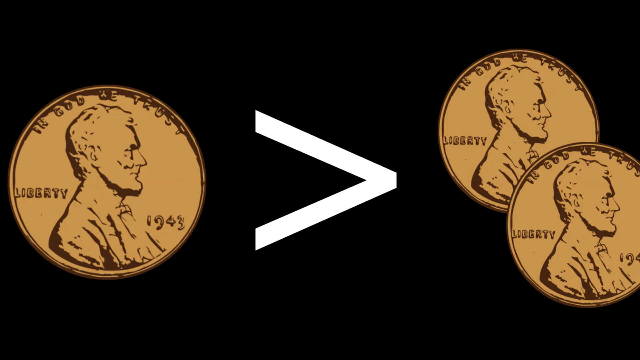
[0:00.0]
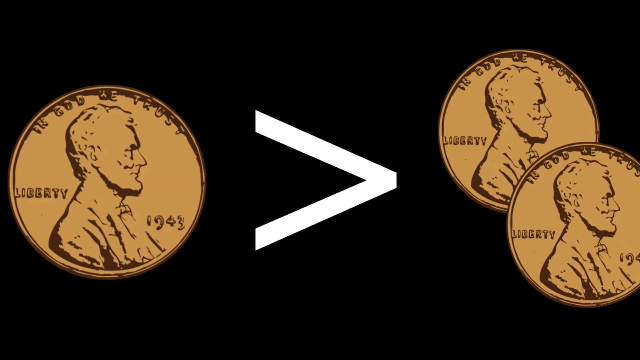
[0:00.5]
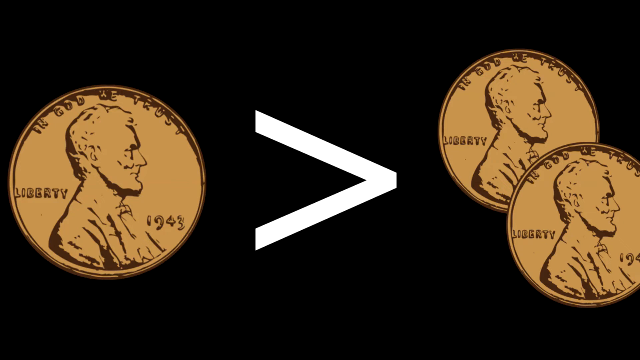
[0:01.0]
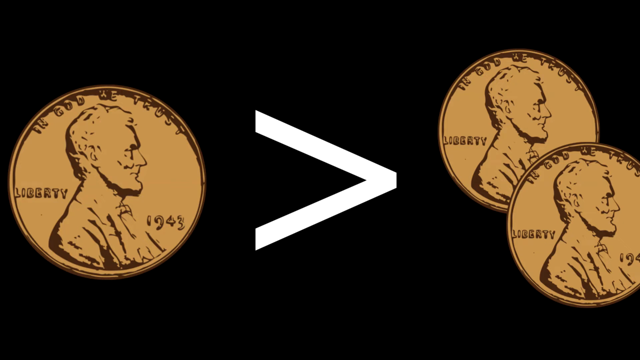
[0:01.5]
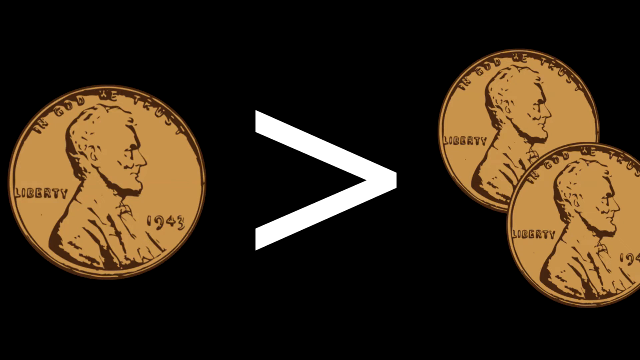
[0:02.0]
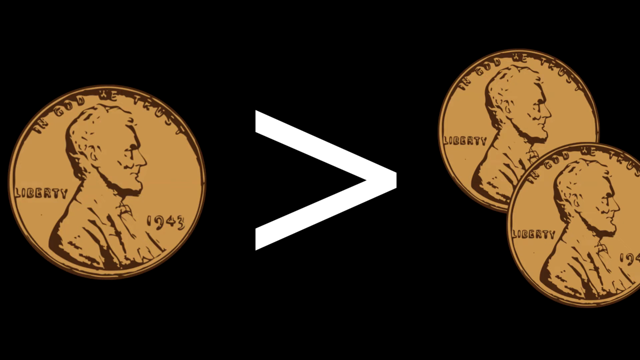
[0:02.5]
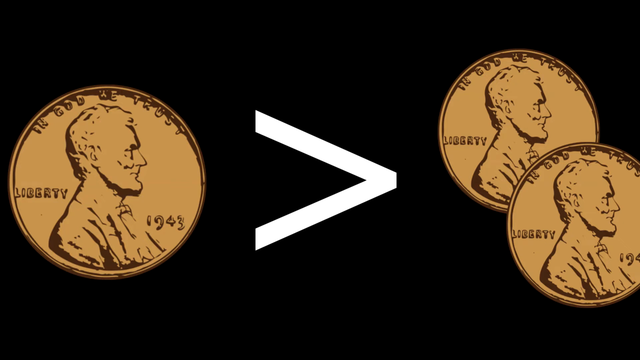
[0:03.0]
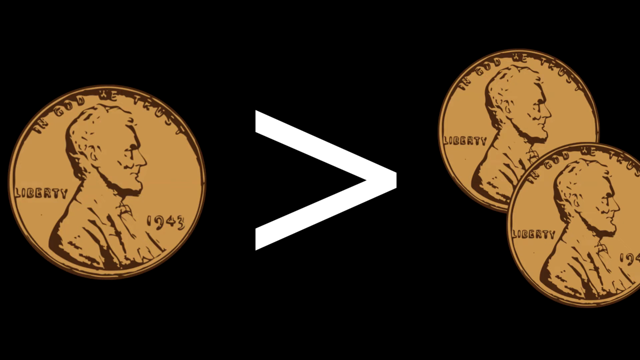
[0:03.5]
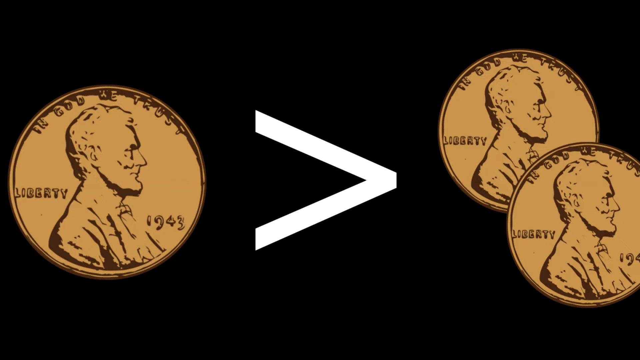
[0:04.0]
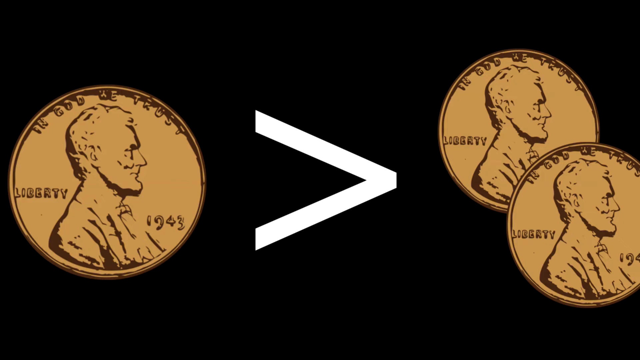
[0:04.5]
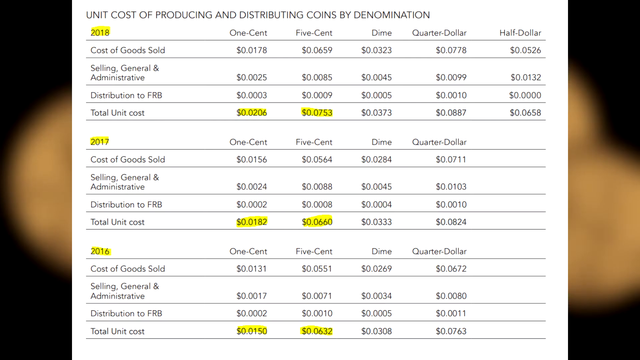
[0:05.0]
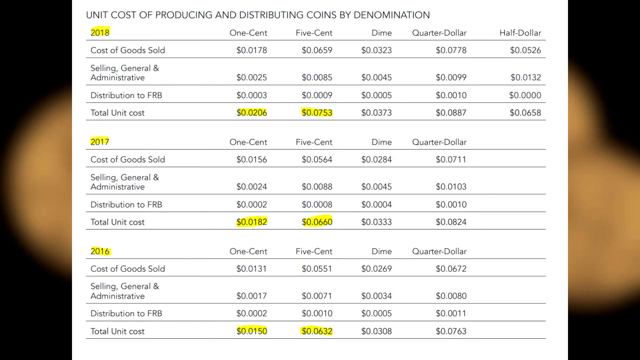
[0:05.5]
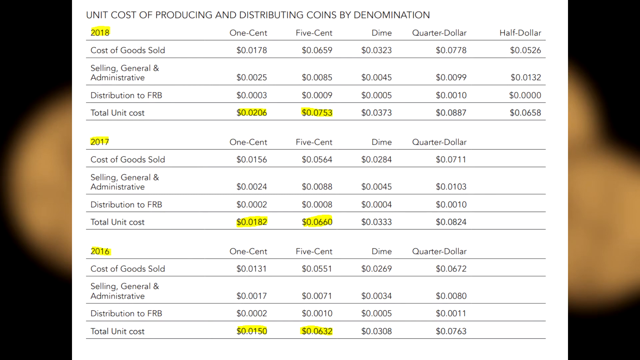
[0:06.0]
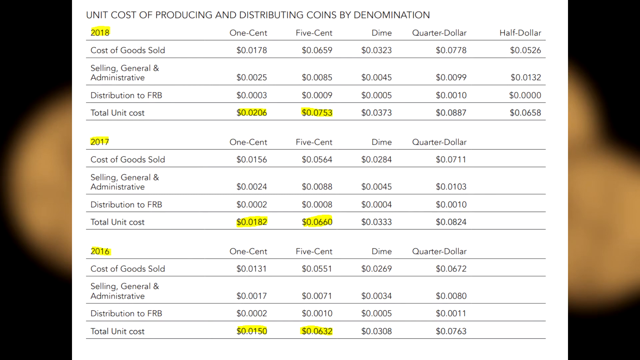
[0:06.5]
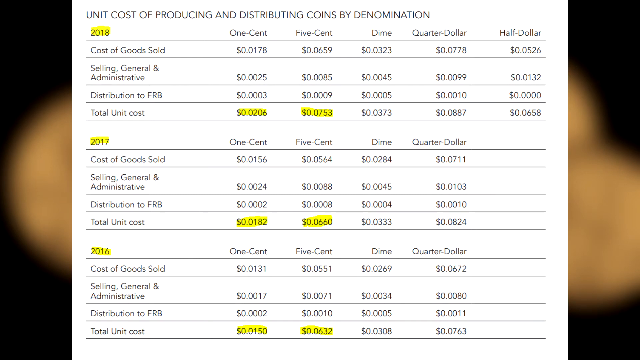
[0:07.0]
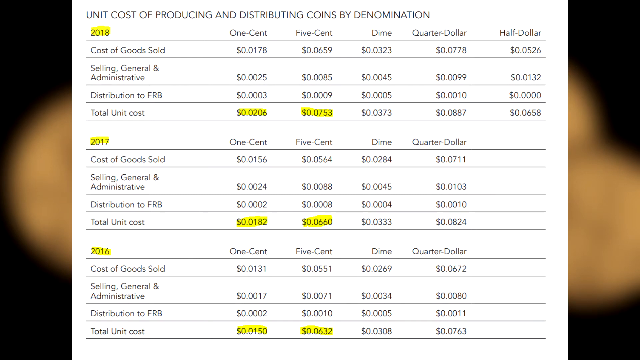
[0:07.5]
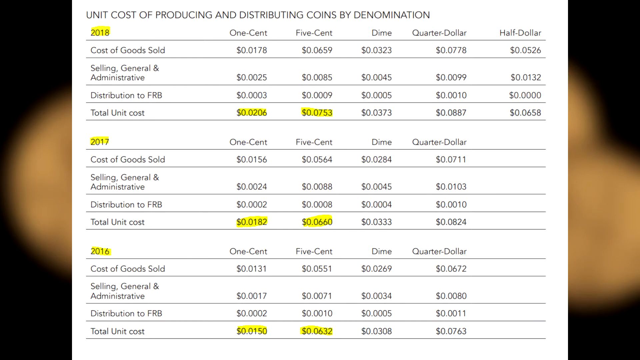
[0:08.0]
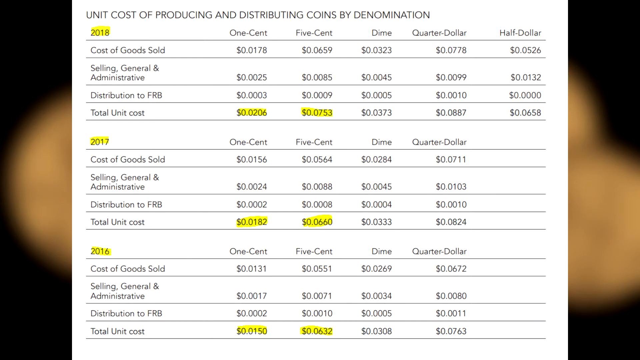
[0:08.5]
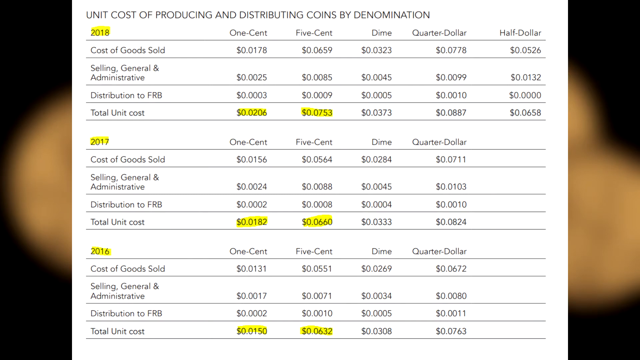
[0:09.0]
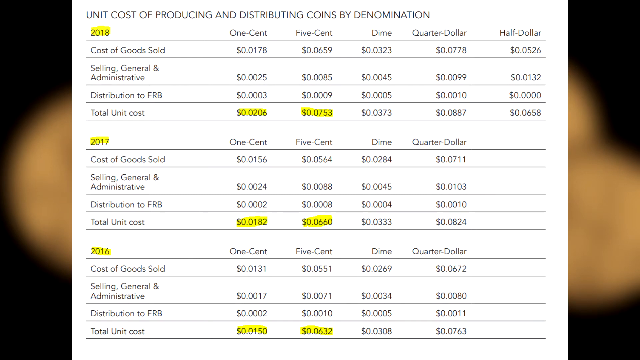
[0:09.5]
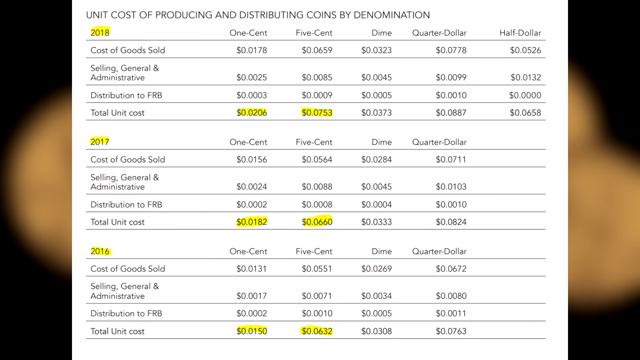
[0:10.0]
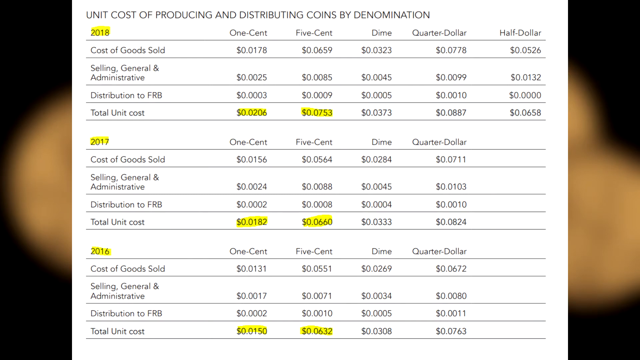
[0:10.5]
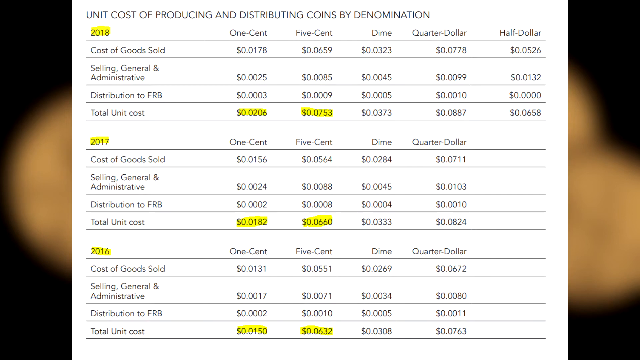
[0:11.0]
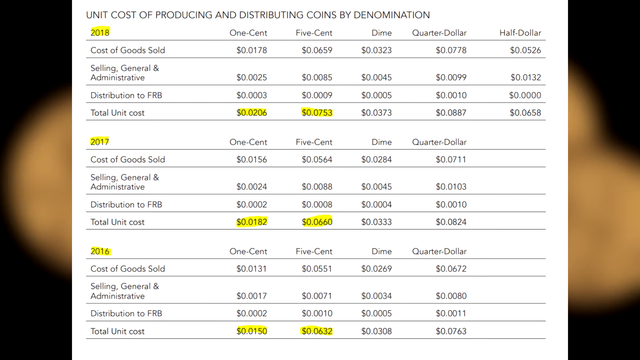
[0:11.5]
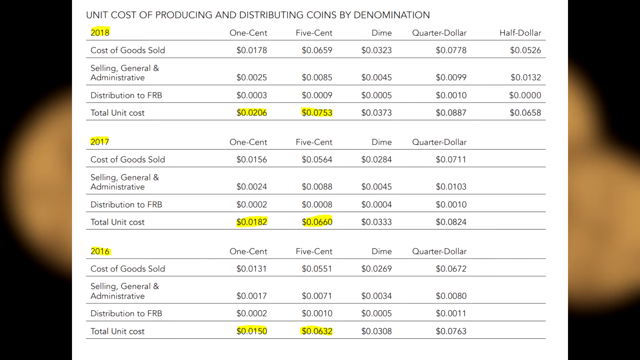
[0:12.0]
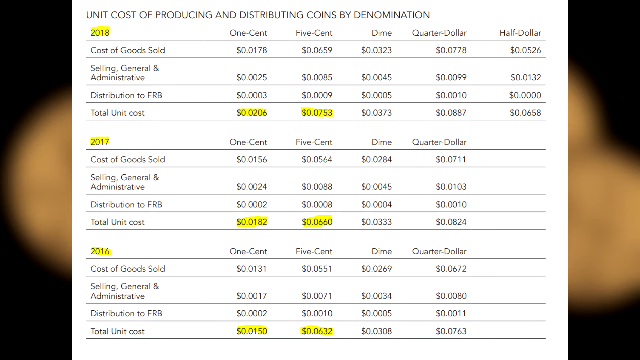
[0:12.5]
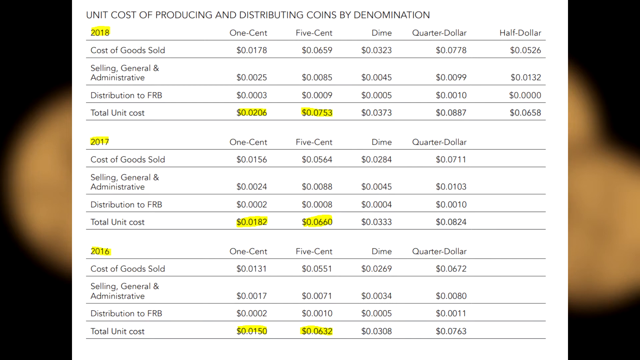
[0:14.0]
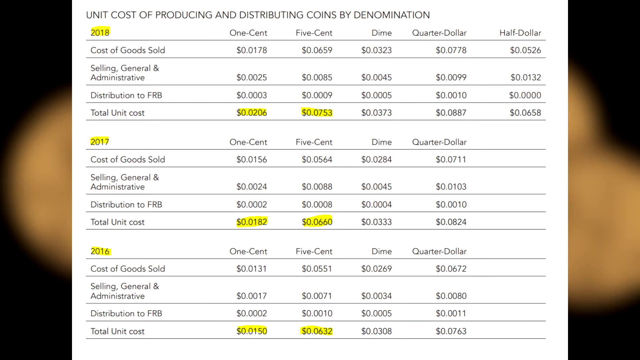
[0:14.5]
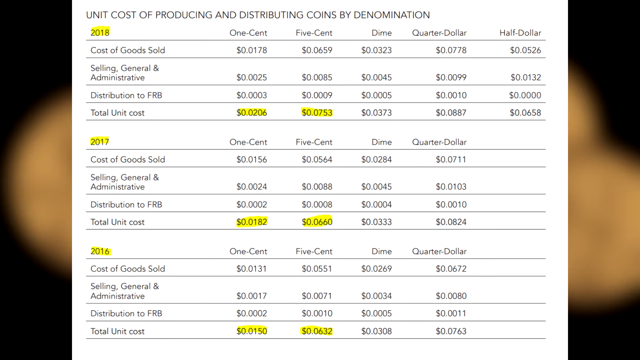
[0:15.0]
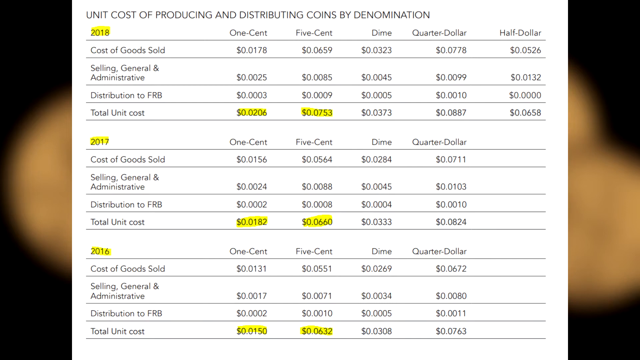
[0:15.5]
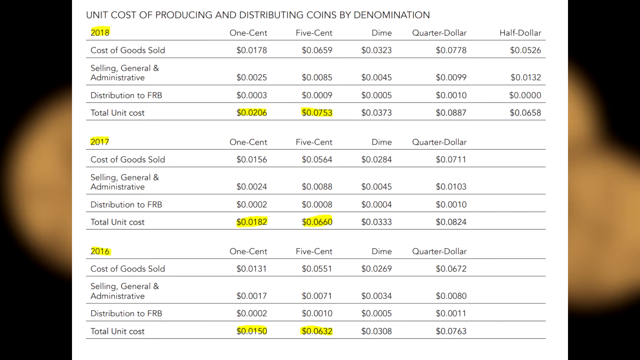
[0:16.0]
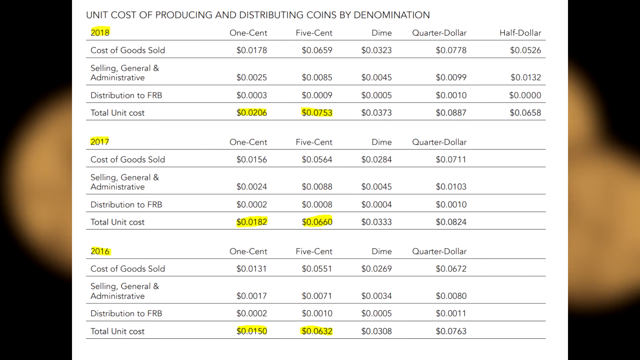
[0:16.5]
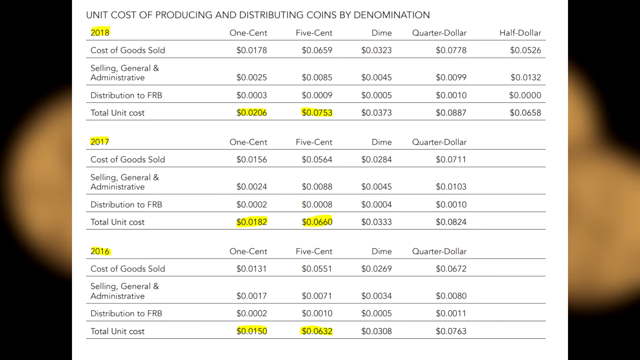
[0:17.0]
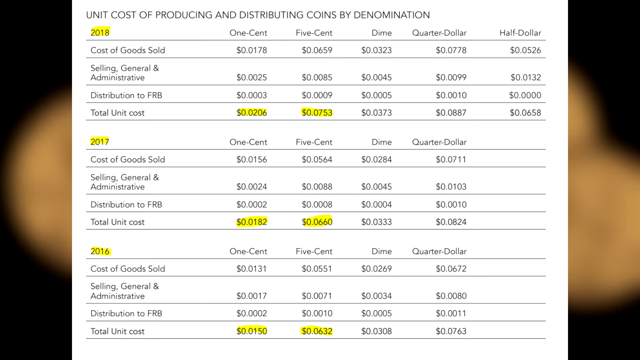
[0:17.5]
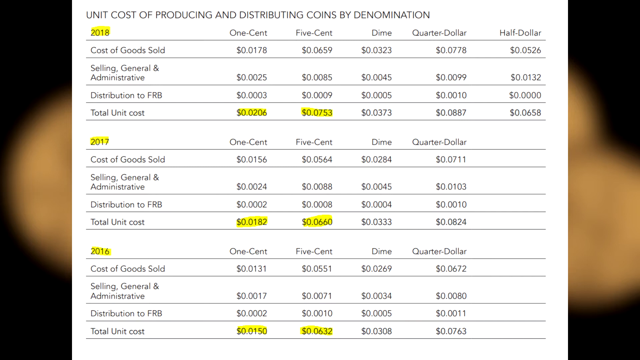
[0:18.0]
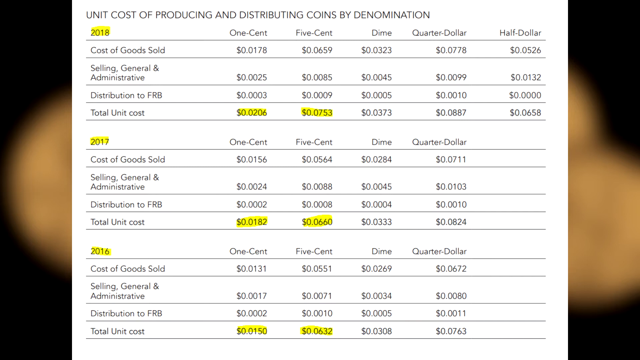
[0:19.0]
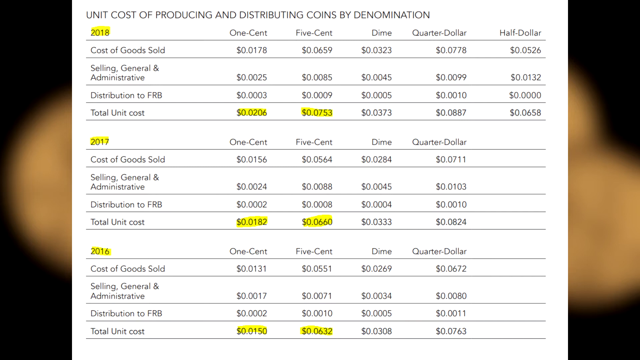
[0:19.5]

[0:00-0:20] A coin appears on the left-hand side, inscribed "In God we trust, Liberty 1943." The coin on the right-hand side has the same inscription but is golden in colour. A chart follows, reading "unit cost of producing and distributing coins by denomination," with columns for one cent, five cent, dime, quarter dollar and half dollar from 2016 to 2018. No half dollars are produced in 2016 and 2017, while in 2018 the one cent, five cent, dime, quarter dollar and half dollar are all produced. The chart lists the cost of producing each coin: a one cent coin costs two cents and a five cent coin costs seven cents to produce. For 2017 it shows a 1 cent coin costing 0.0182 cents and a 5 cent coin 0.0660 cents, apparently meaning the cost of production and distribution is greater than the coin's face value.